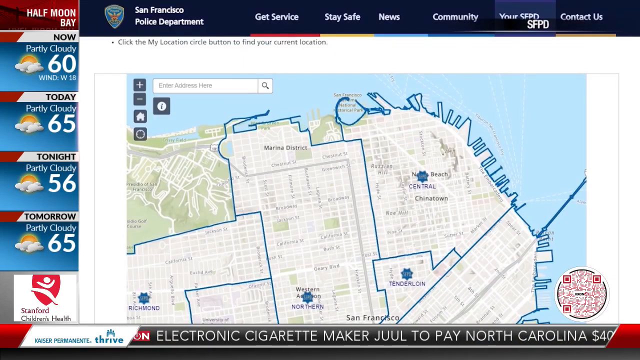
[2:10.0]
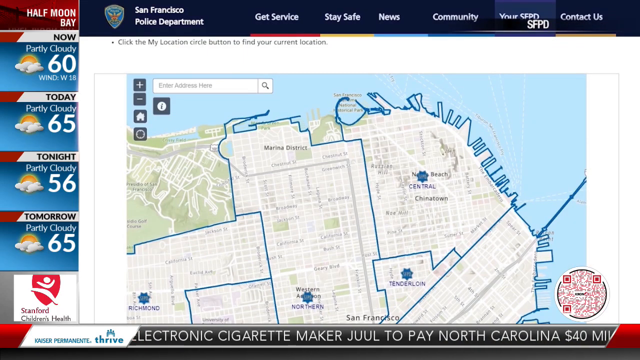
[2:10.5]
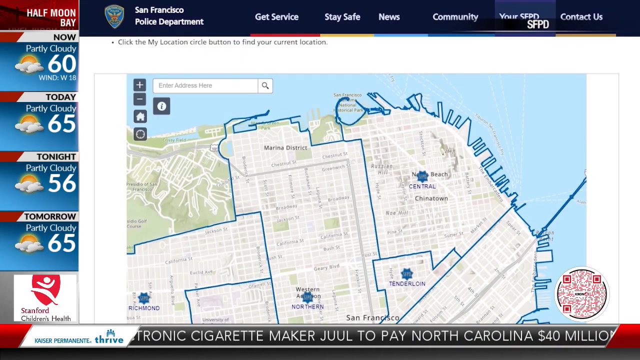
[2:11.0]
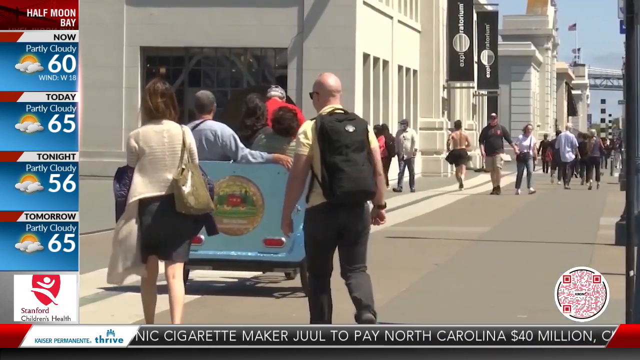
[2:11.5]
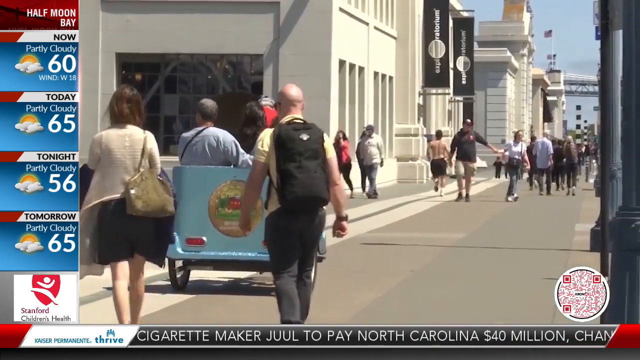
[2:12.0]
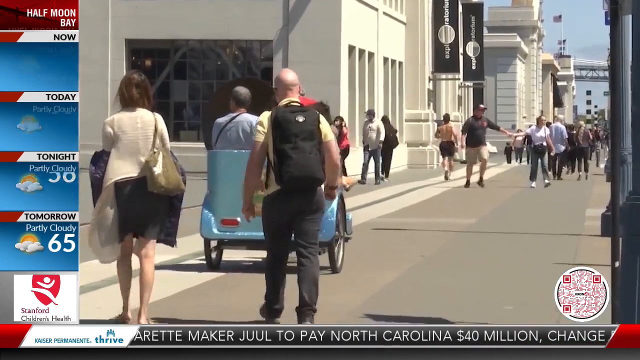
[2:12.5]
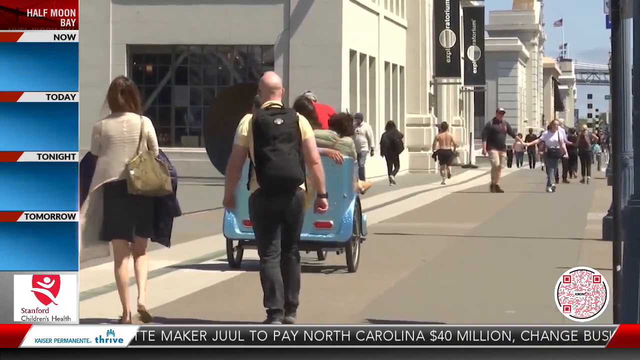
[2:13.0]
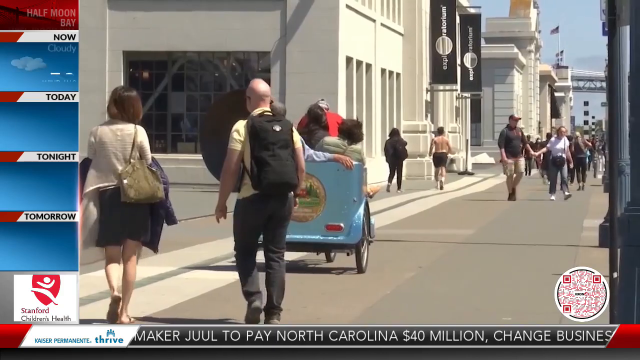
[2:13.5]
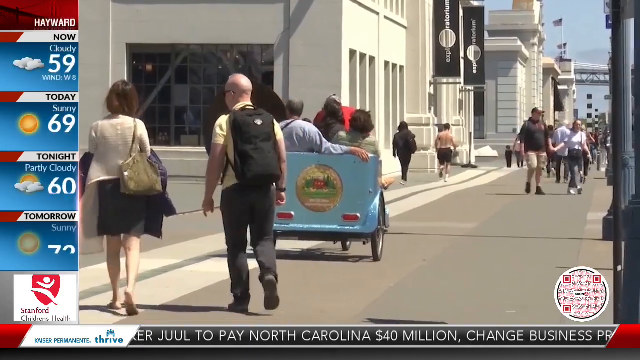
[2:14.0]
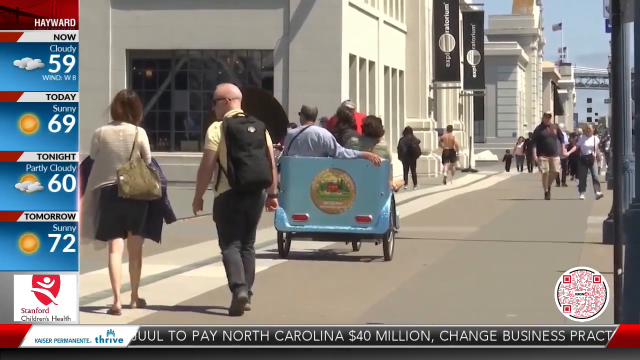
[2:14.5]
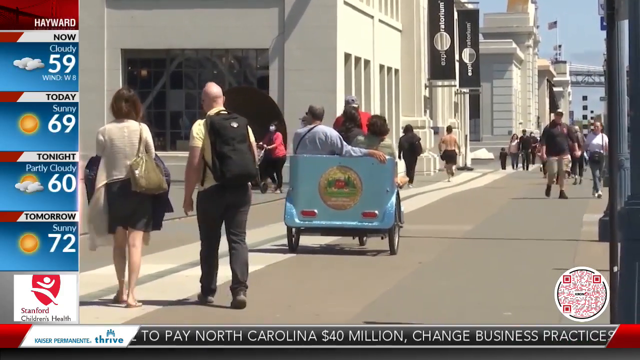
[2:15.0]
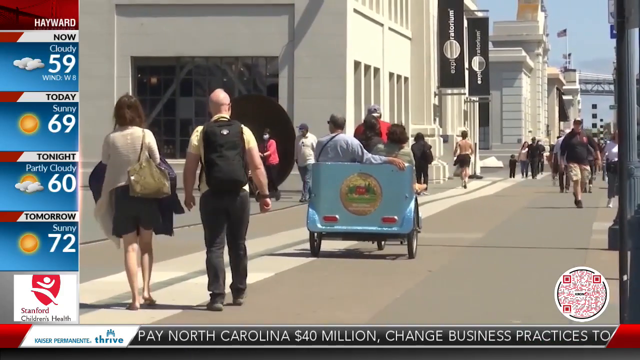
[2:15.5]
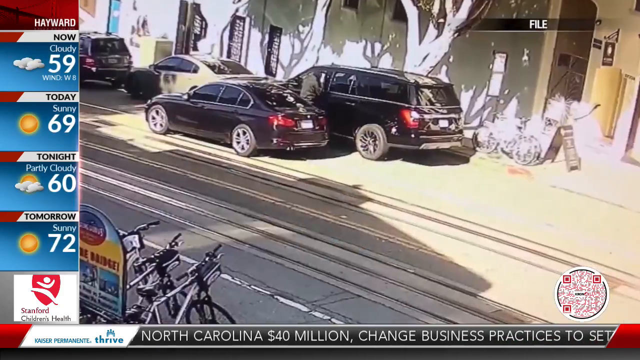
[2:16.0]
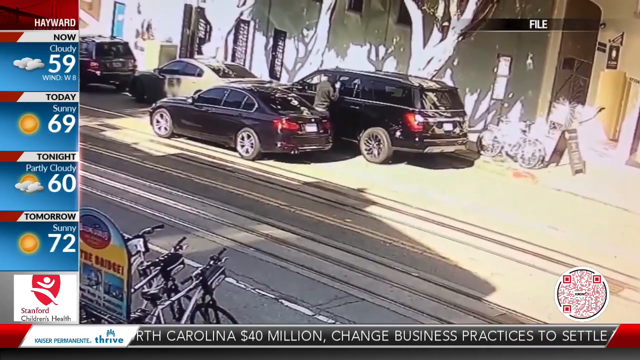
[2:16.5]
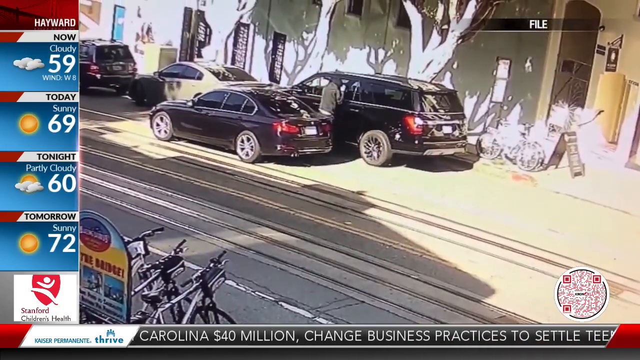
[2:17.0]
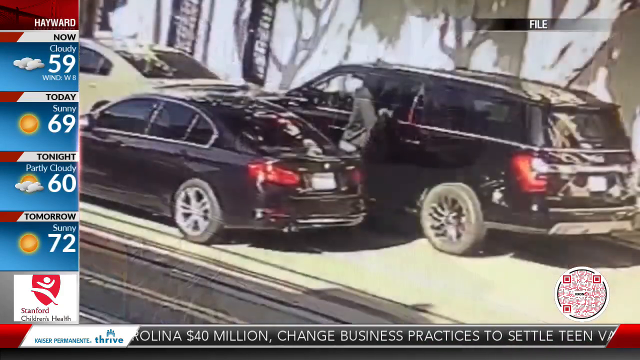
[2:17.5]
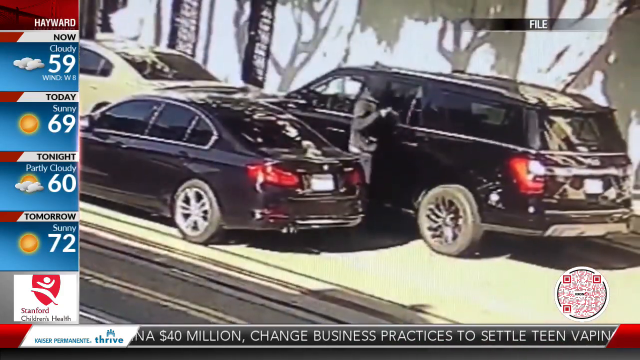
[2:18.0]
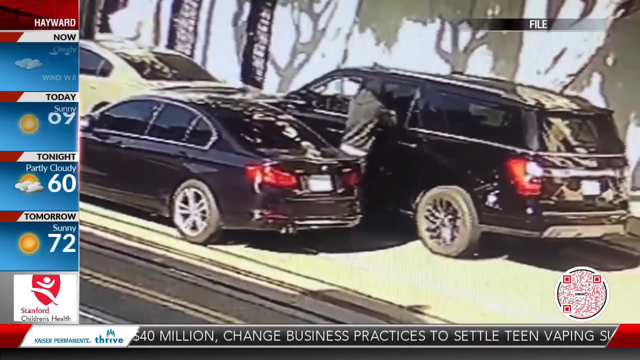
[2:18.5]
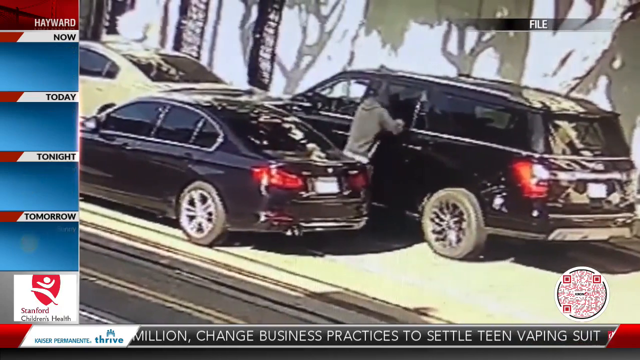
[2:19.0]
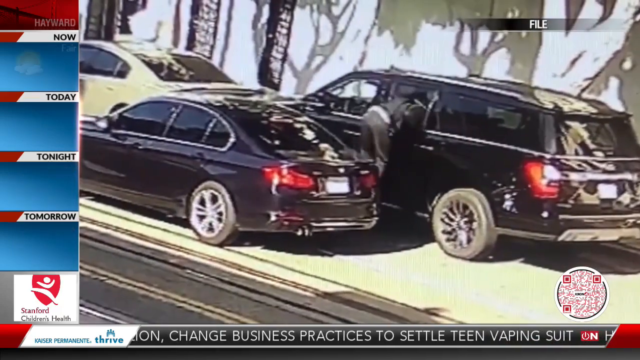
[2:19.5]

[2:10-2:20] The scene appears to be a boardwalk with multiple people walking, most of them away from the camera. Two people ride in a rickshaw being pushed by another person. Beige buildings are visible, and there is a flag in the background. A woman on the left wears a black skirt and carries a purse; she walks with a man wearing a black backpack. The video then changes to a different scene of what appears to be another break-in: two black vehicles with a person standing between them. The person punches out the back window of a car and begins to lean into it, and the footage stops there. On the left-hand side, a weather forecast is still scrolling through different cities, and the news station's QR code is in the bottom right corner.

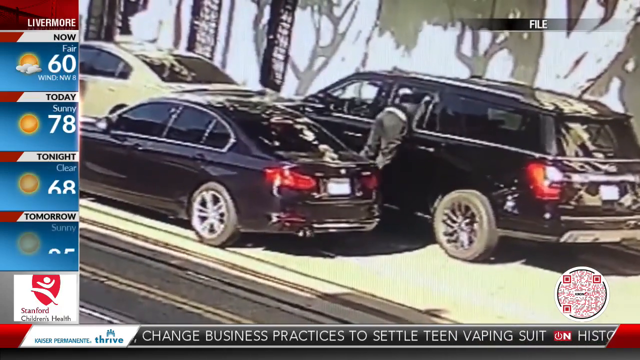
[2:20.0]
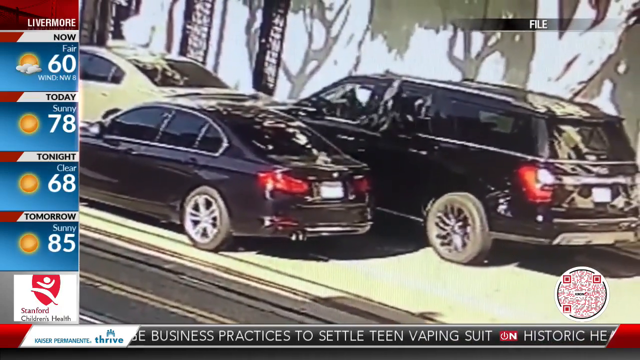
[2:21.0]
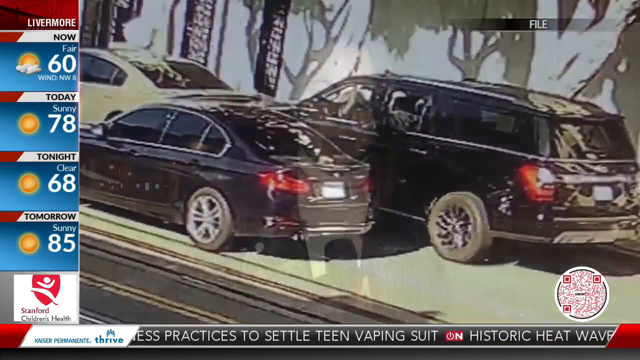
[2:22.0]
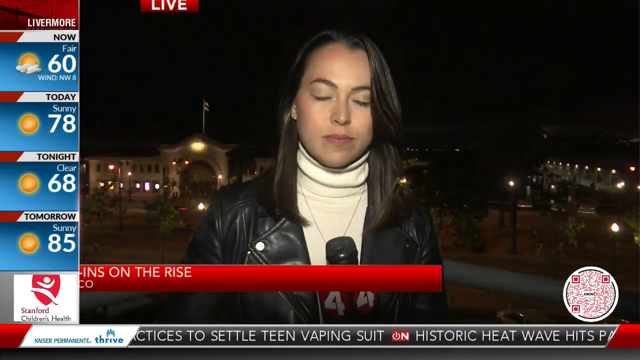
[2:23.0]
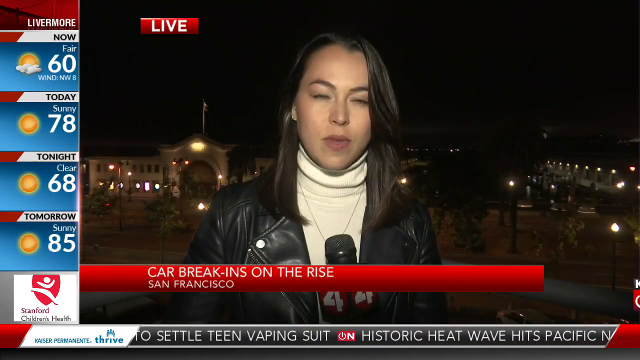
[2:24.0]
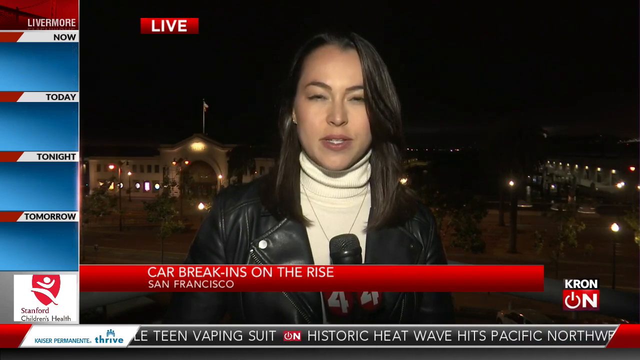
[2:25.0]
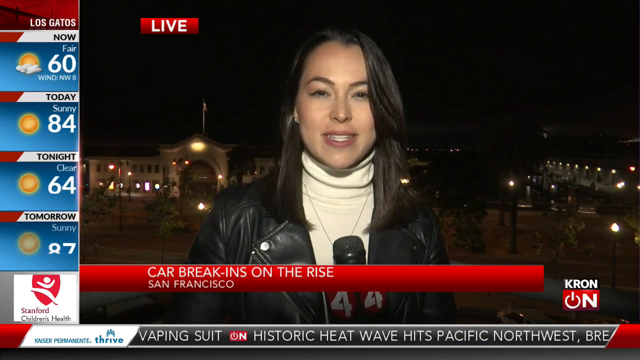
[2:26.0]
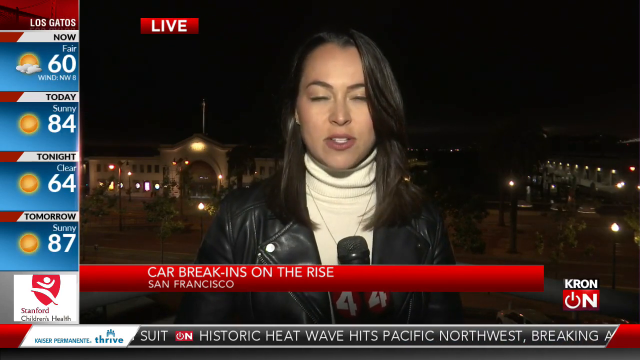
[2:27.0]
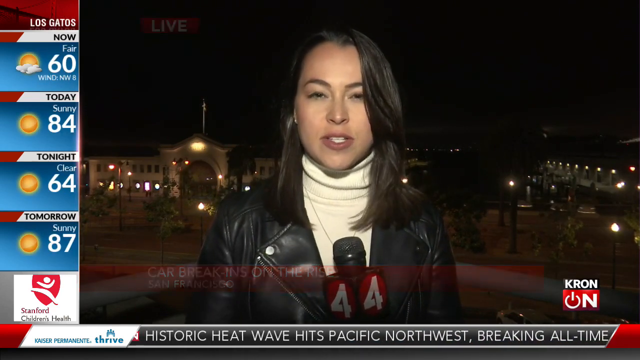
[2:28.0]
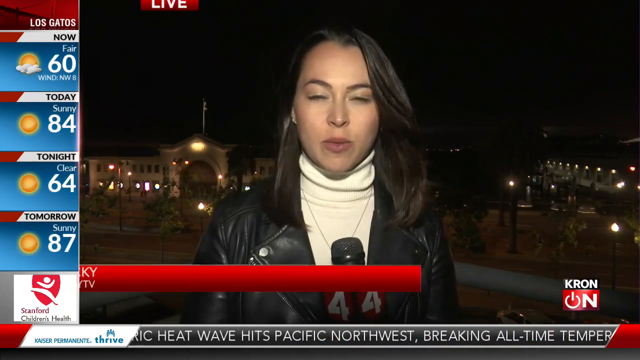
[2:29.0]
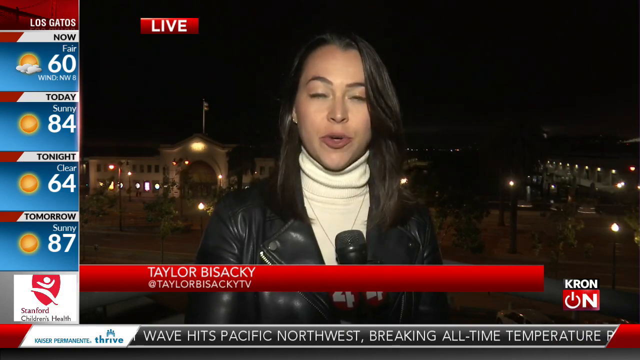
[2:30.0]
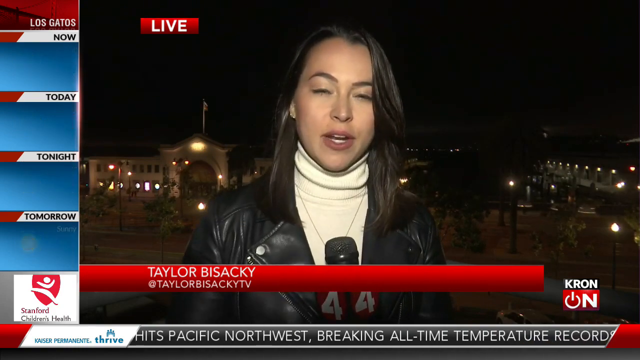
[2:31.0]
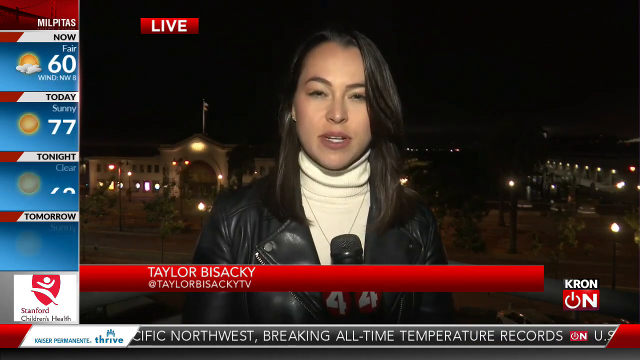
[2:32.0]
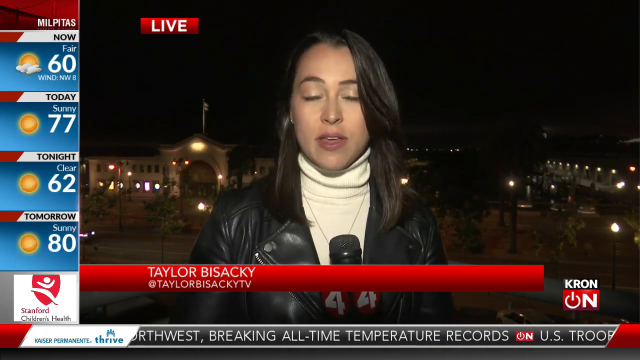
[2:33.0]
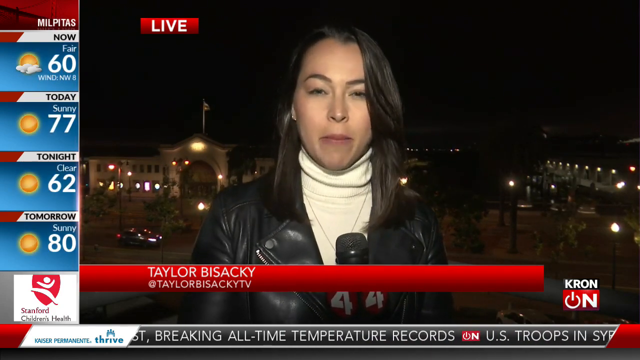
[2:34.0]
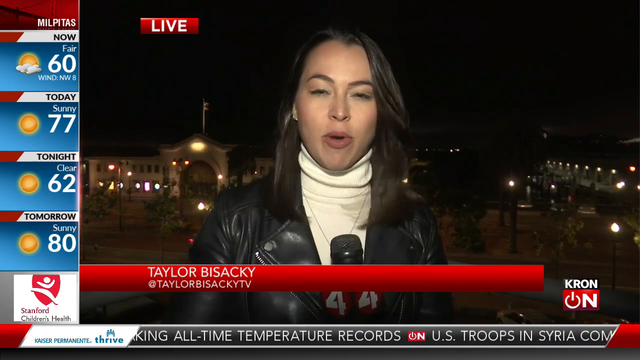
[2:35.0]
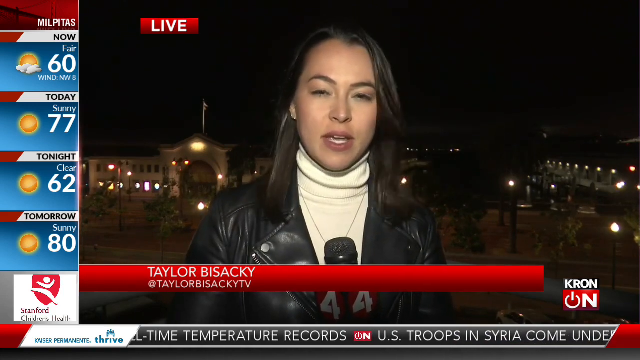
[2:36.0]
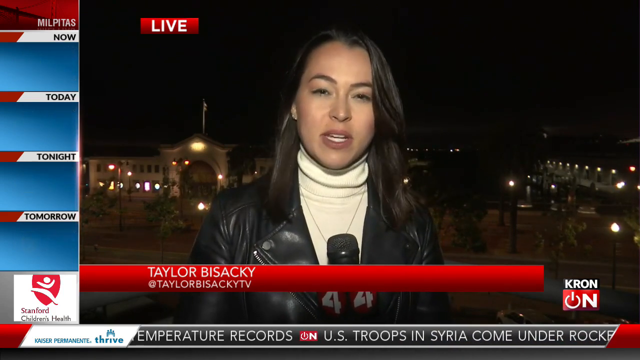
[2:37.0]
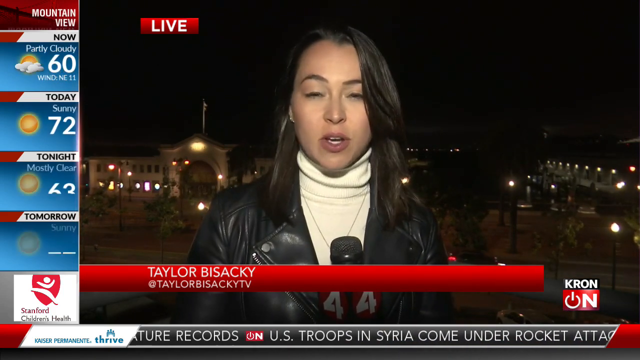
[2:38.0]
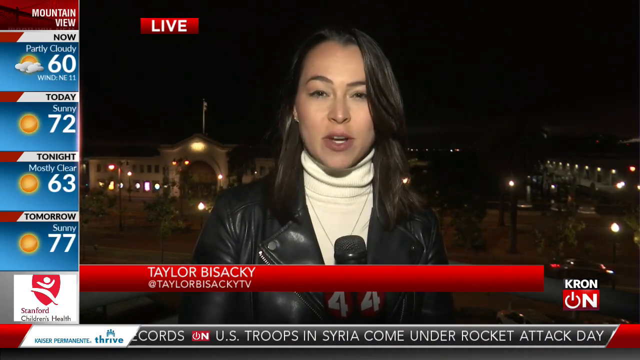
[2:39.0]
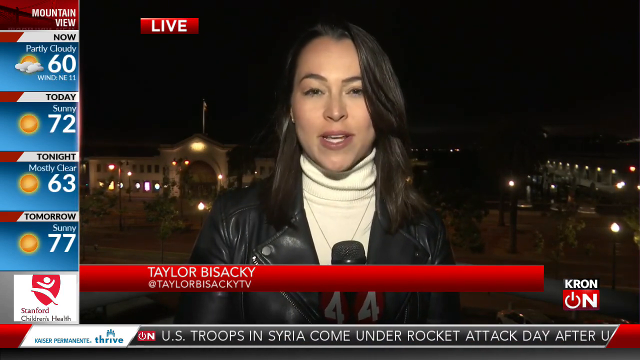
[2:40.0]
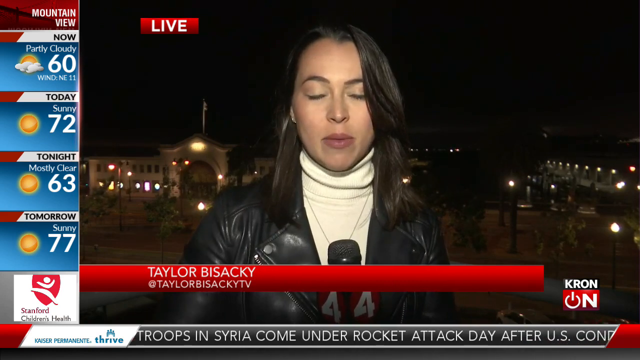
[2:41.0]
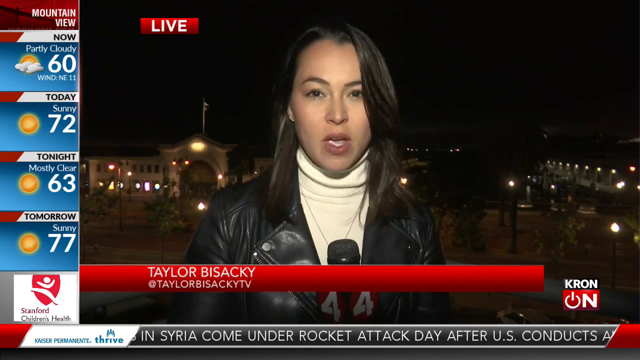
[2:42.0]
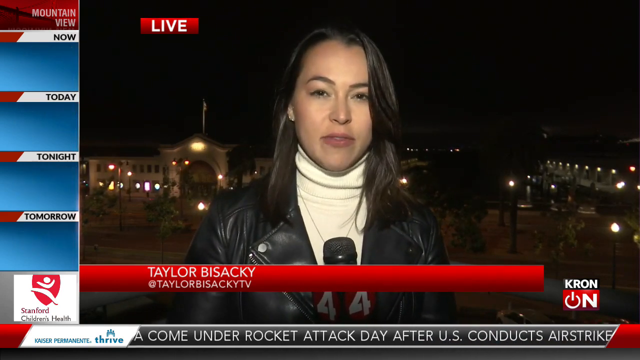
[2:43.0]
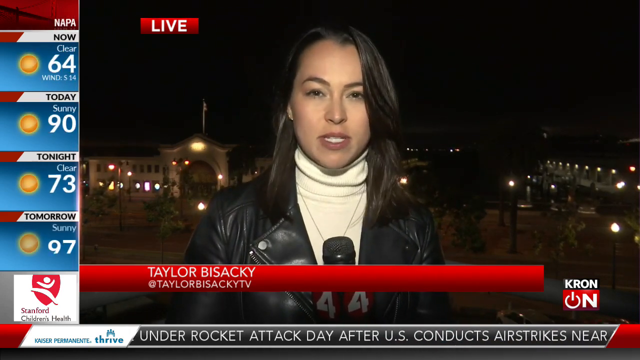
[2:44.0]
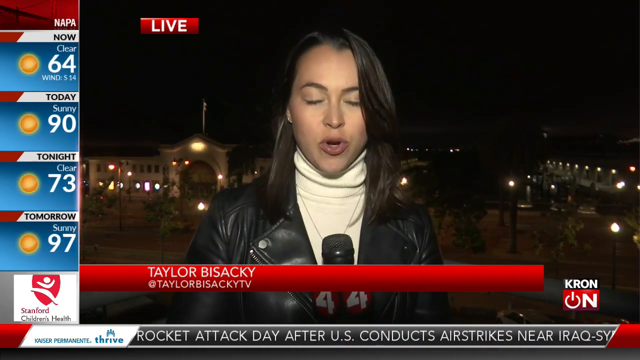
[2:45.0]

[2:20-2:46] The newscaster on the scene is shown again on screen, identified as Taylor Bisacchi, with her social media name "@Taylor Bisacchi TV". She talks into the microphone and looks straight into the camera, with a shot of the city behind her. The view stays focused on her talking to the camera and does not change to anything else. On the left-hand side, the weather forecast is still scrolling from city to city, and the Stanford Children's Health logo is at the bottom left-hand corner. News scrolls along the very bottom of the video, mentioning teen vaping suits, then "historic heat wave hits Pacific Northwest, breaking all-time temperature records", and then "U.S. troops in Syria come under rocket attack day after U.S. conducts airstrikes near Iraq-Syria border". The video then ends.